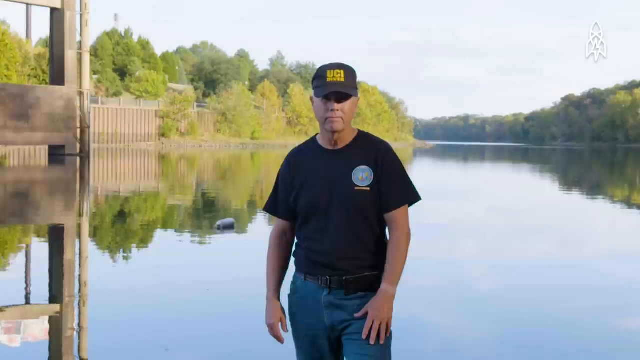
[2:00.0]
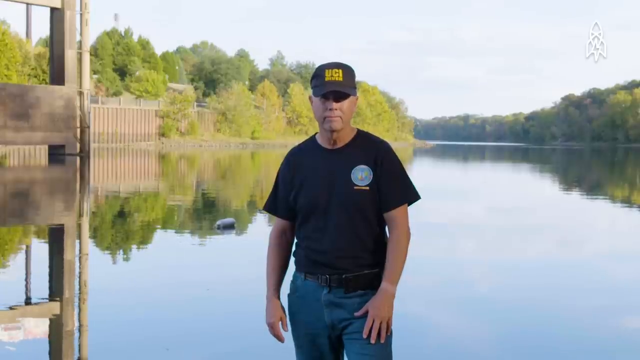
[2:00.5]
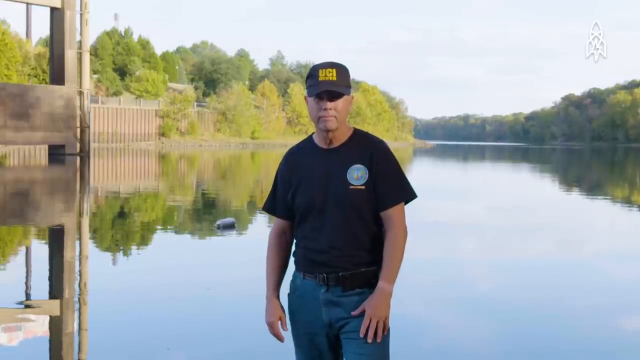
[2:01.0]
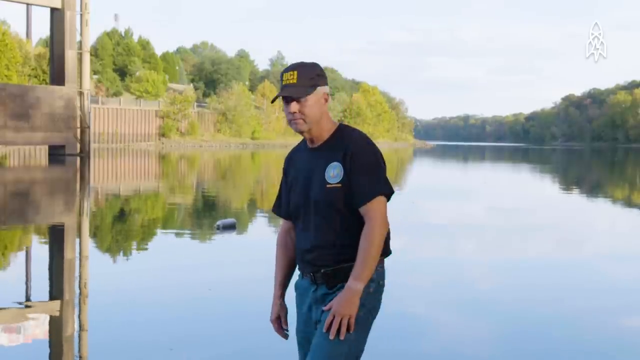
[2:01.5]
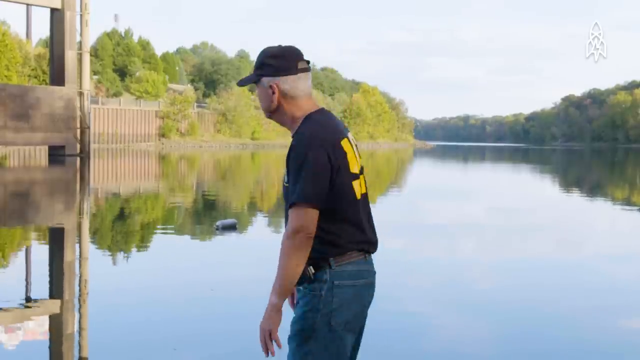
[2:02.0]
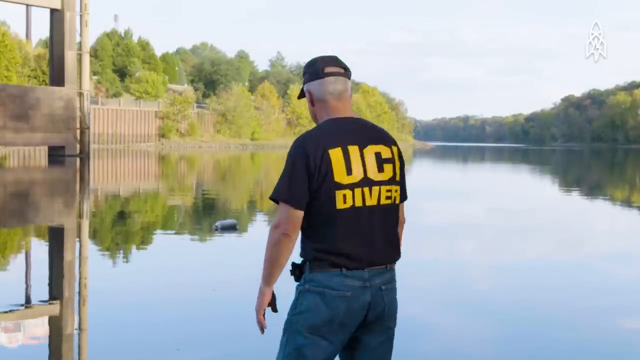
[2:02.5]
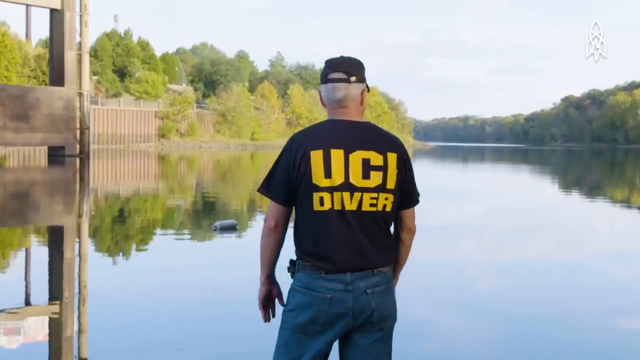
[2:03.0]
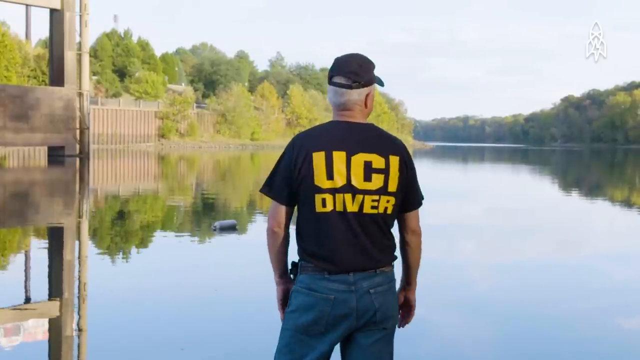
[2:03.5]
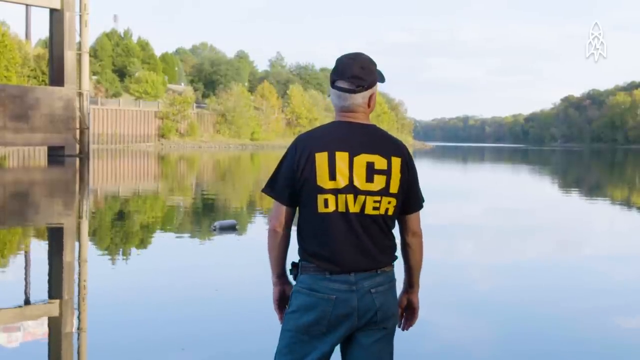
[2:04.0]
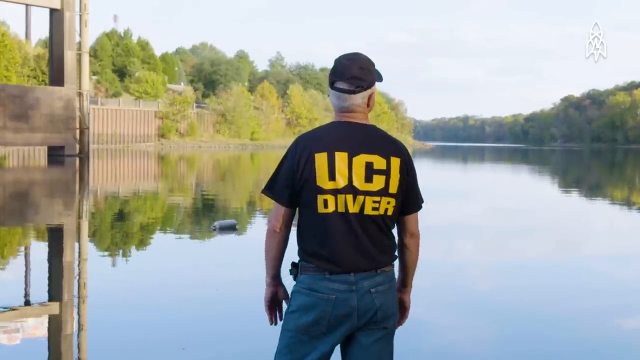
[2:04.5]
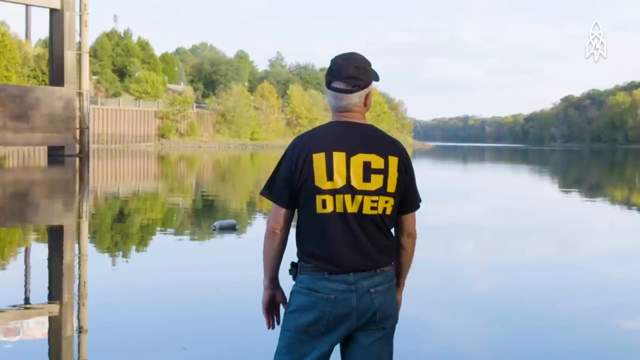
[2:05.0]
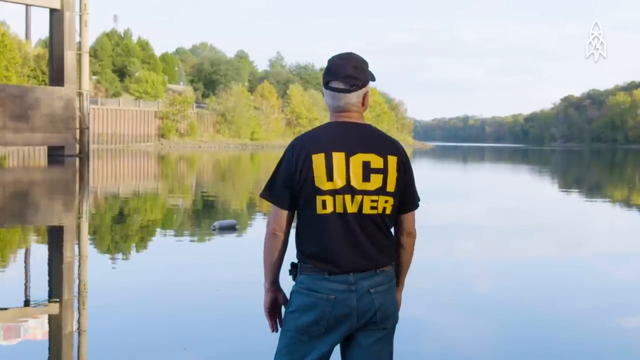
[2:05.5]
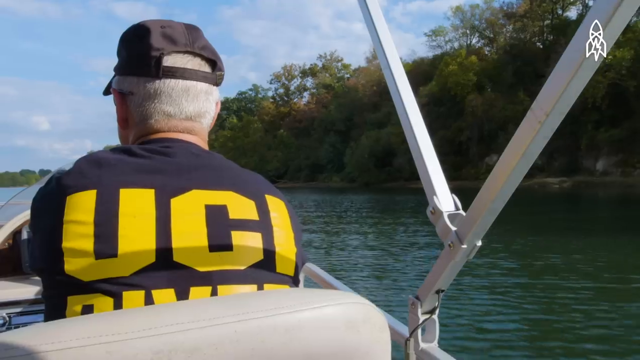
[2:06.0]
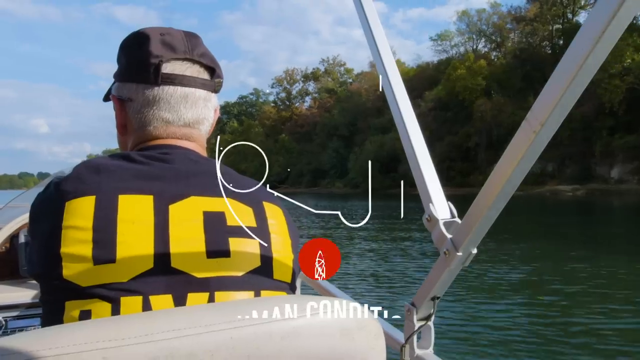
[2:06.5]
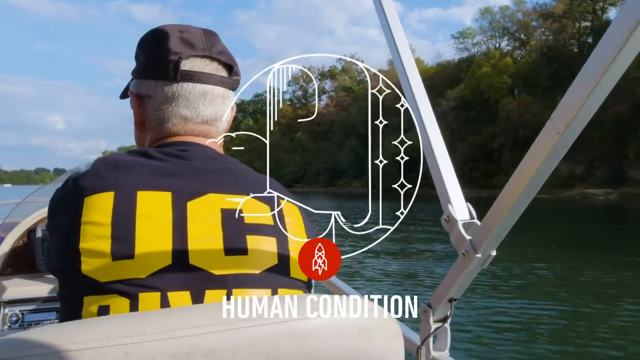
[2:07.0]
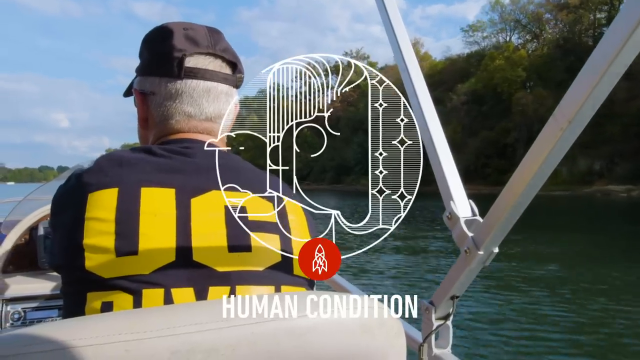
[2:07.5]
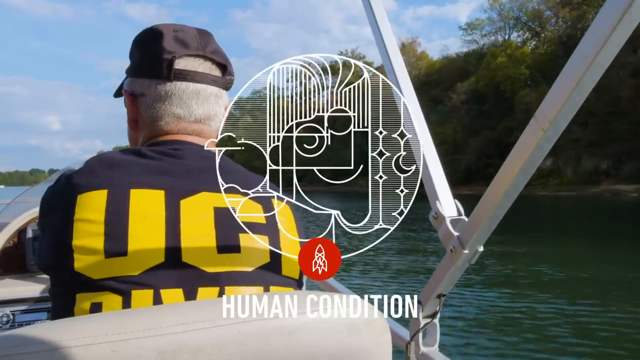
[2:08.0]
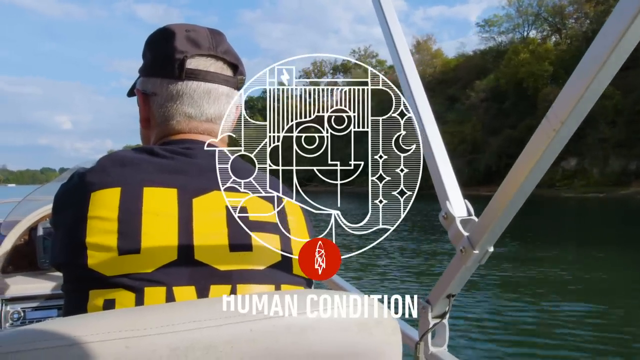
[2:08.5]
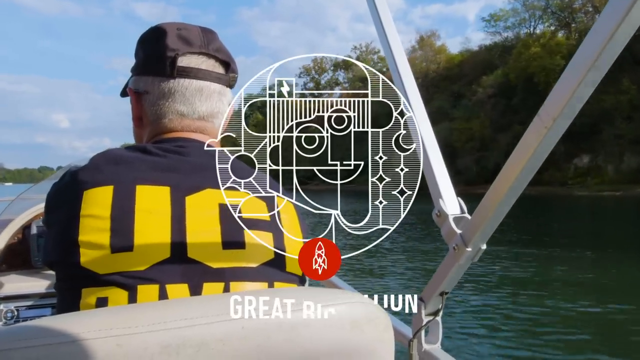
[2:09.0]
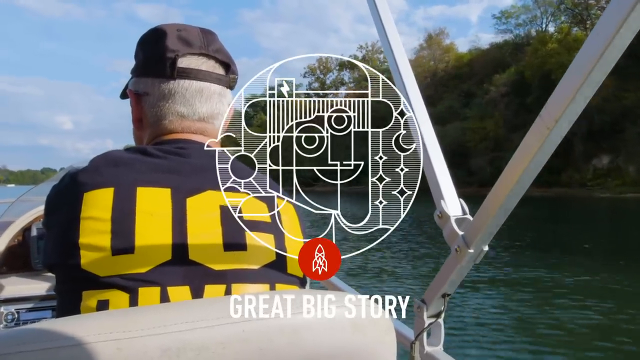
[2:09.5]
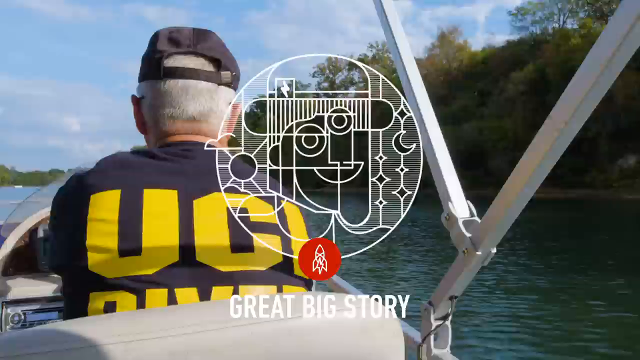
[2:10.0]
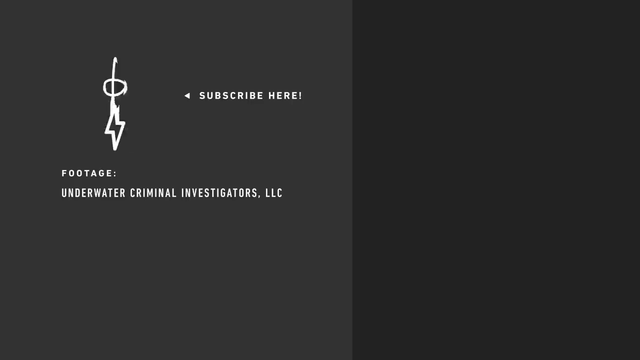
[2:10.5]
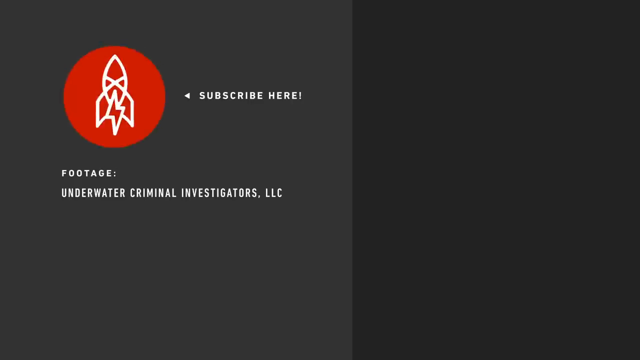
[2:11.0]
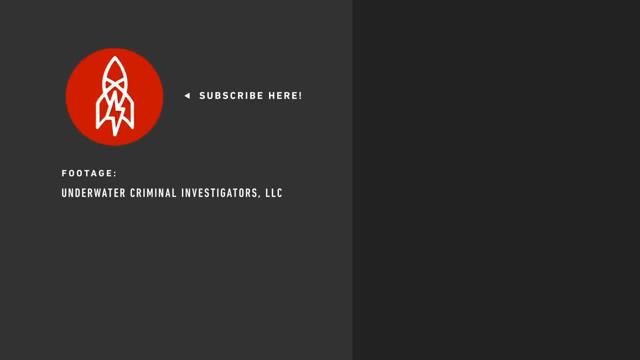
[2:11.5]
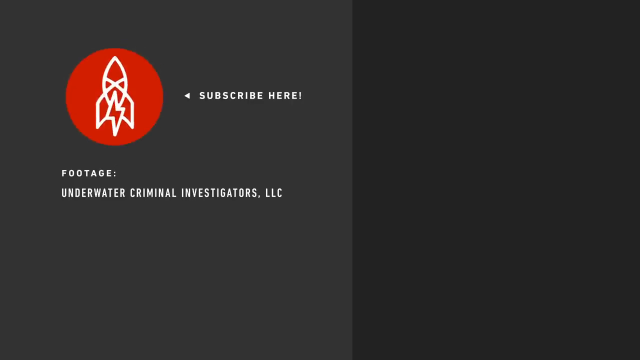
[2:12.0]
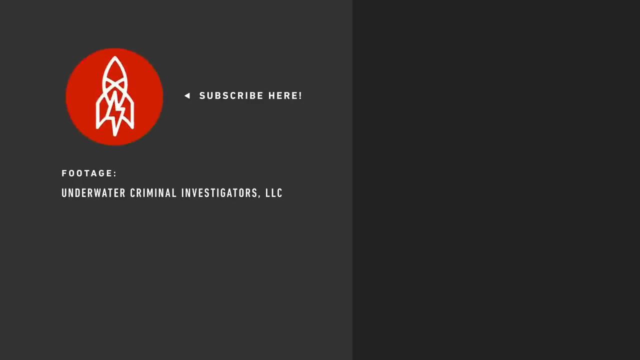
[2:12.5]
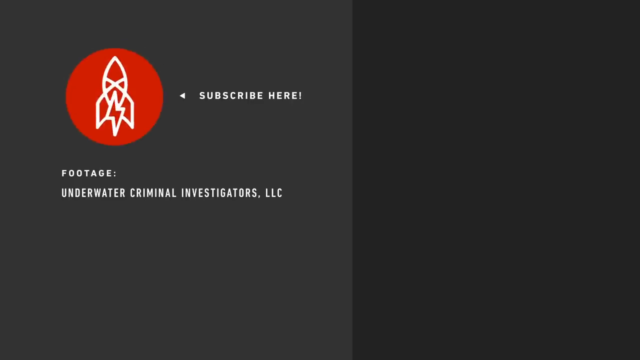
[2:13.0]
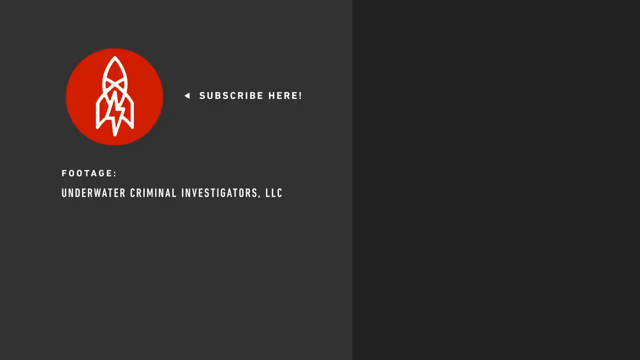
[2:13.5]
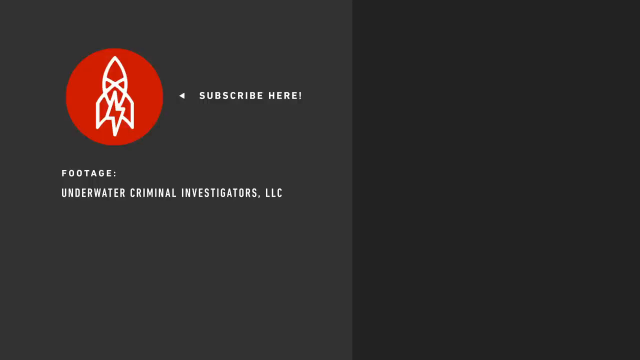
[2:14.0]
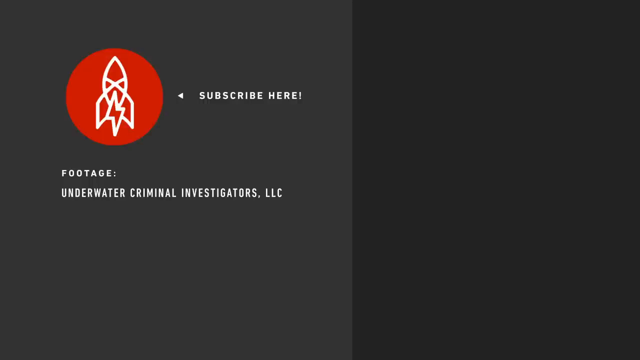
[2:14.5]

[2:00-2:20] The diver is shown talking. The UCI diver stands in front of a water view with his back turned, facing another direction, and his shirt reads "UCI diver". The video ends with a white design and a heading reading "human condition", with what looks like the diver driving a boat really fast on the river. The video encourages viewers to subscribe, and the footage is credited to underwater criminal investigators LLC.